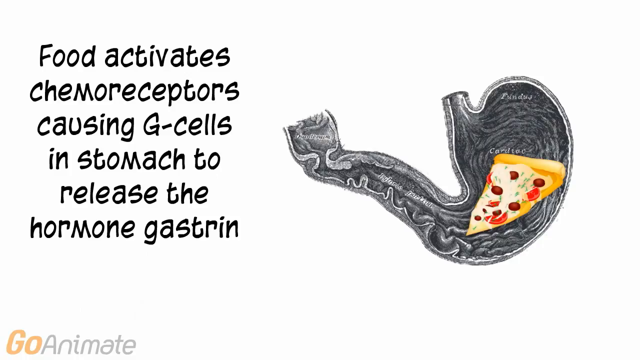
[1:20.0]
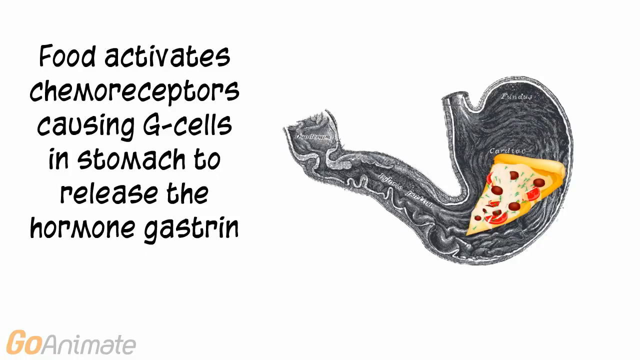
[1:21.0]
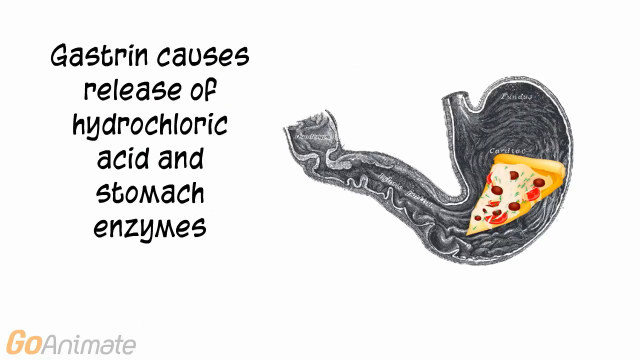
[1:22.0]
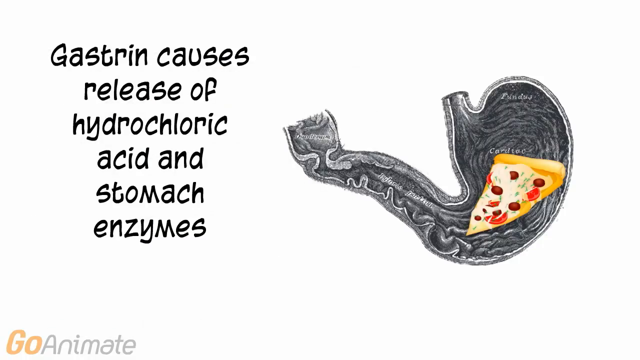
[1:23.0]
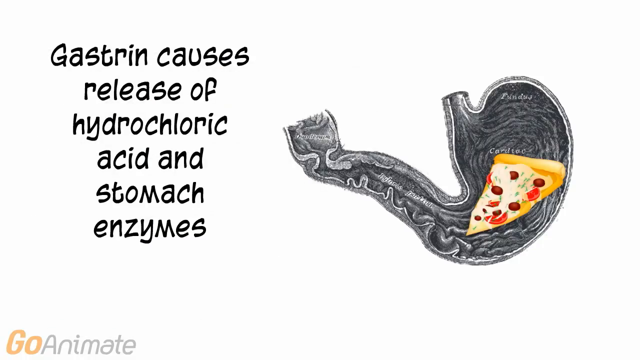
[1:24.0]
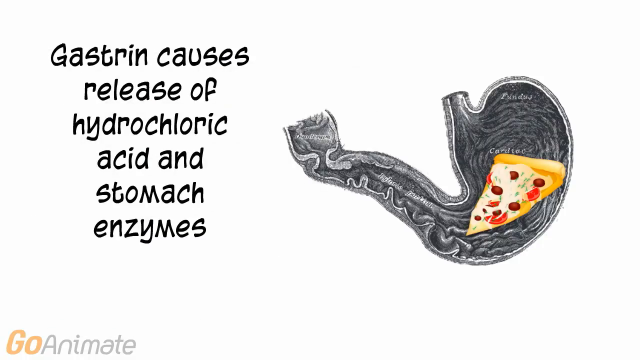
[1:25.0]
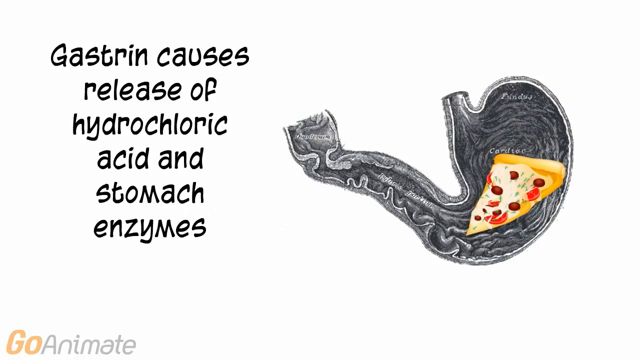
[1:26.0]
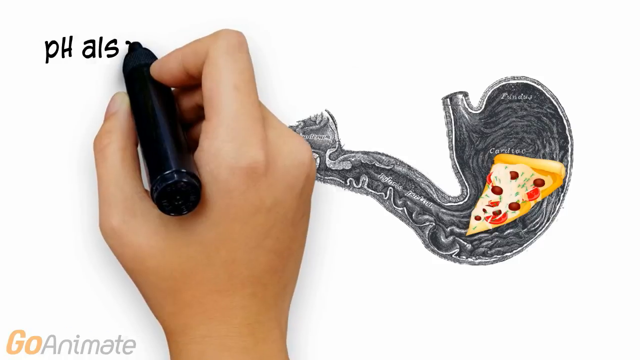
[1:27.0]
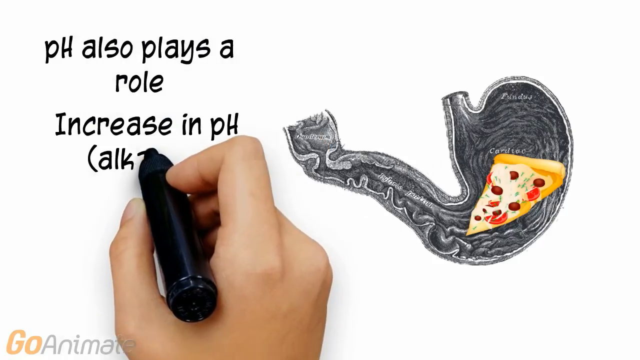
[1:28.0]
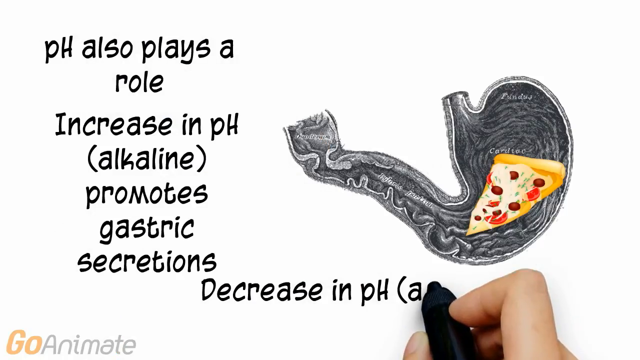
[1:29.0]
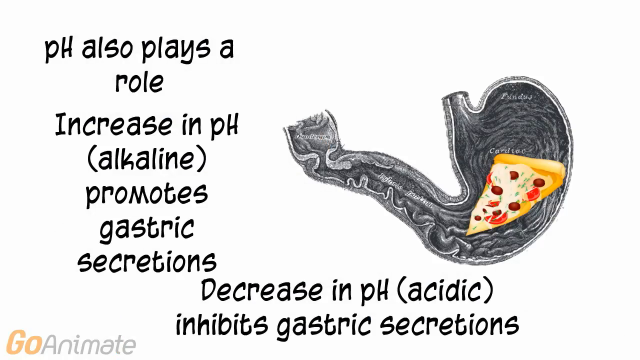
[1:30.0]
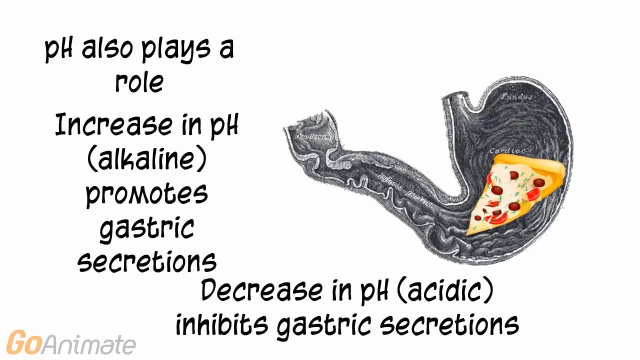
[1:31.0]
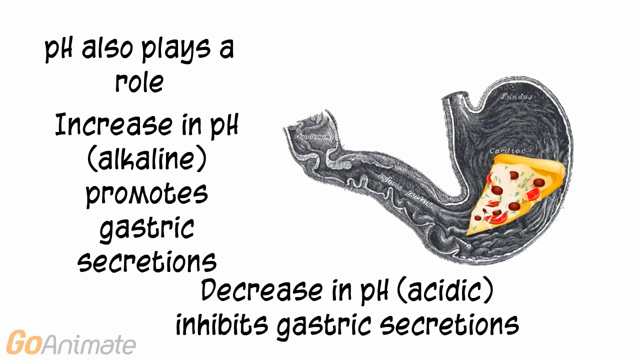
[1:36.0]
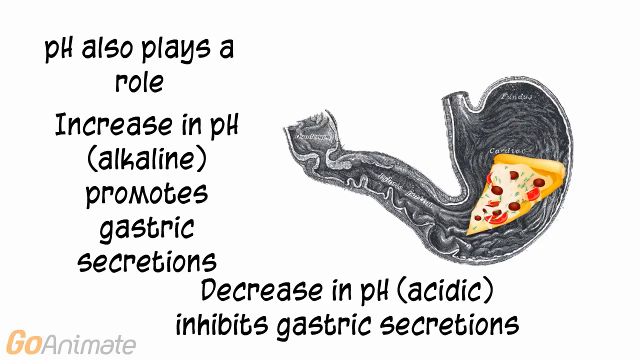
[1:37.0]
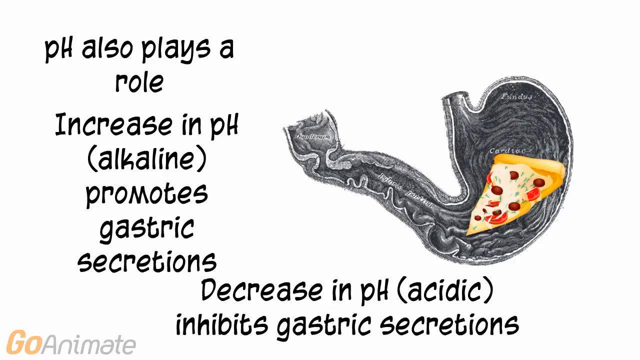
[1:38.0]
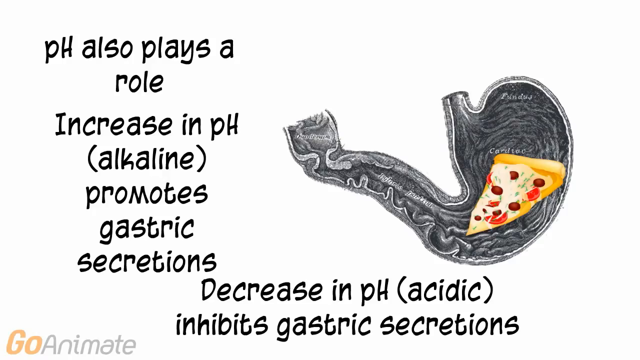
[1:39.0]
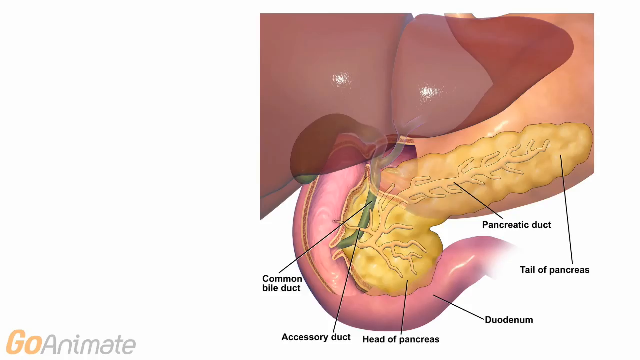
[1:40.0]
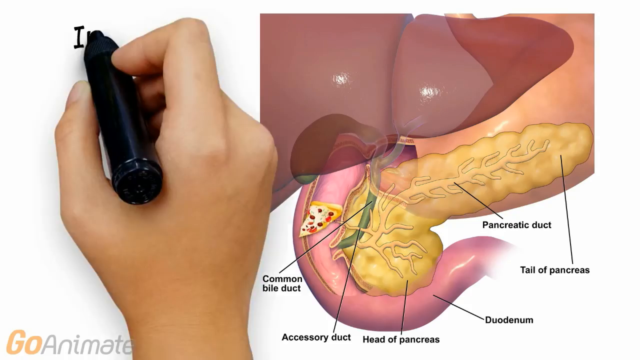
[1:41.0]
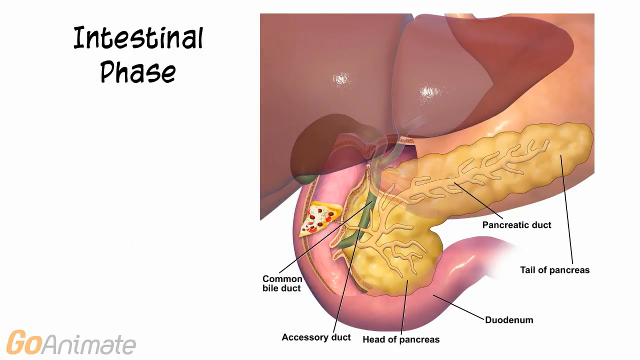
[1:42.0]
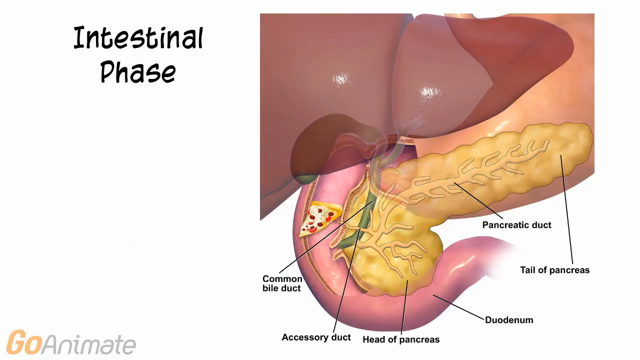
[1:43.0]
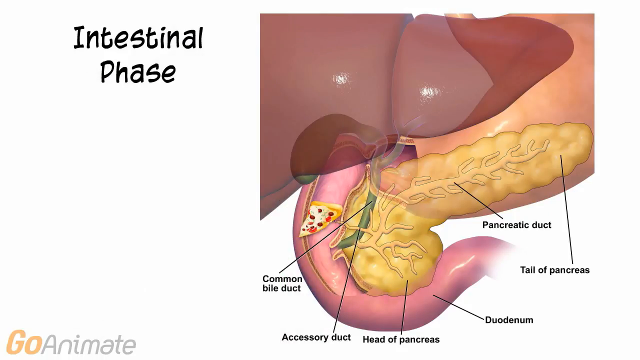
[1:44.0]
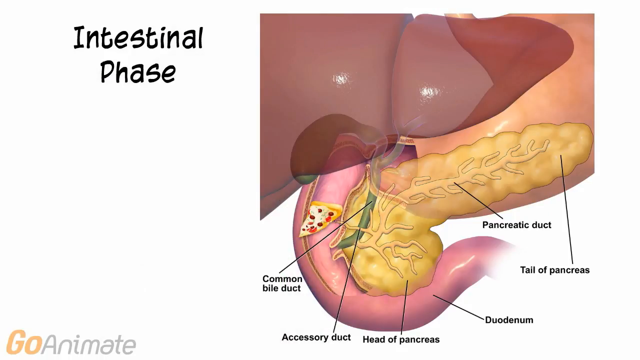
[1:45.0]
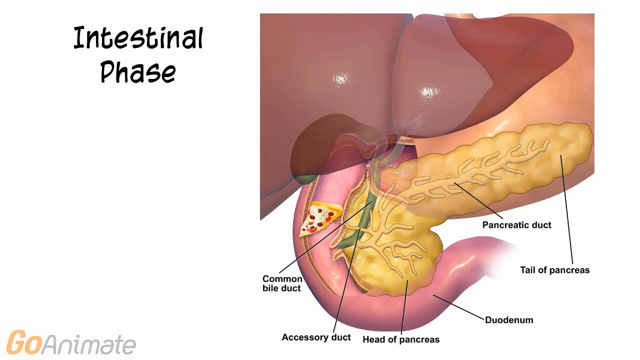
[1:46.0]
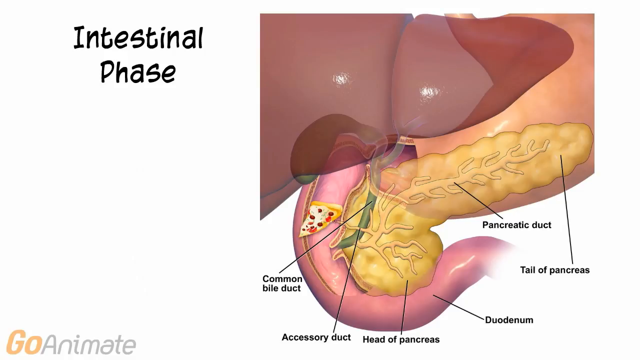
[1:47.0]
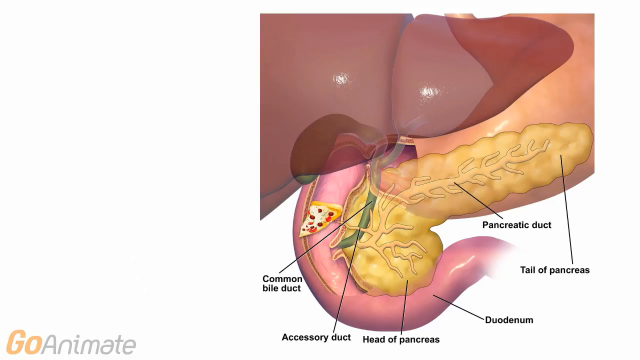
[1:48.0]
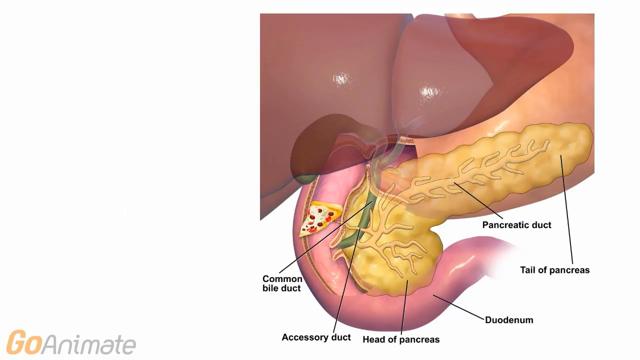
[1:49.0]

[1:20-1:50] A screen shows a picture of a medical stomach with a piece of pizza inside it, with text reading "gastrin causes release of hydrochloric acid and stomach enzymes." Further text reads "pH also plays a role. Increase in pH alkaline promotes gastric secretions. Increase in pH acidic inhibits gastric secretions." The scene then transitions to an image of the common bile duct, accessory ducts and related areas of the pancreas, with "intestinal phase" written out. The pizza is shown inside the ducts and related areas in the picture. Each part is colored and labeled, including the tail of the pancreas, the pancreatic duct, the head of the pancreas and others.